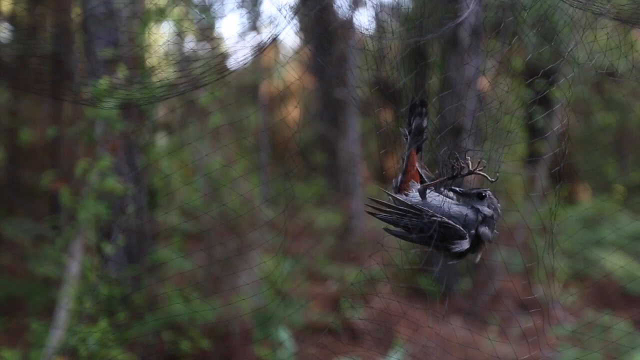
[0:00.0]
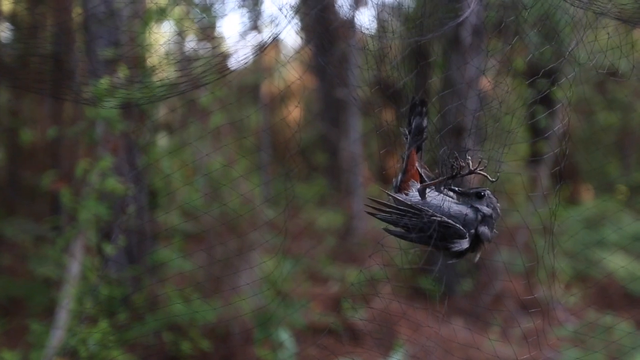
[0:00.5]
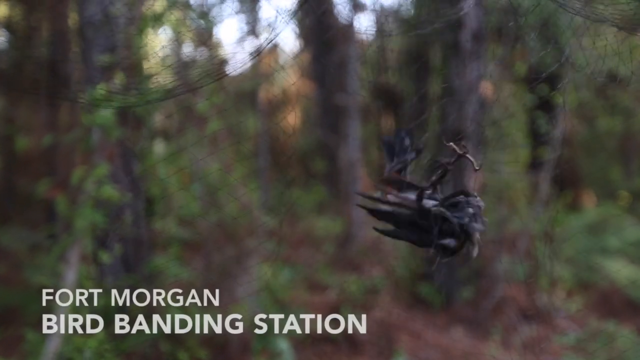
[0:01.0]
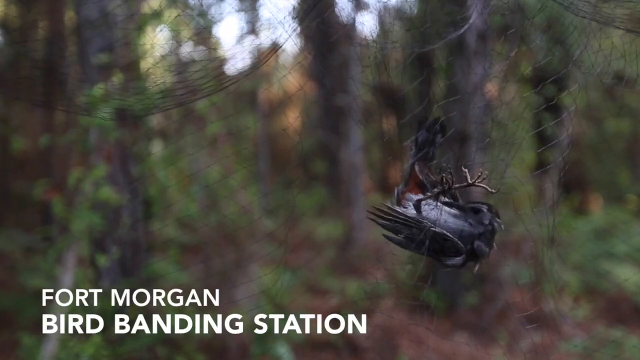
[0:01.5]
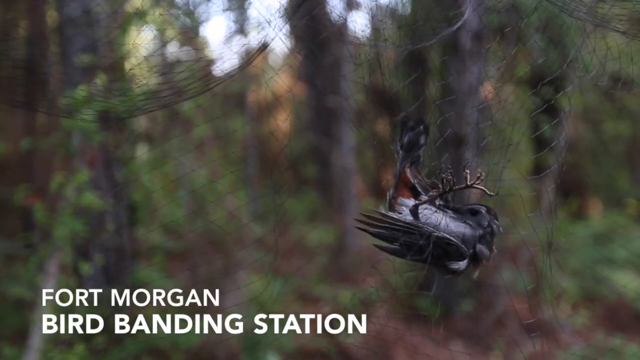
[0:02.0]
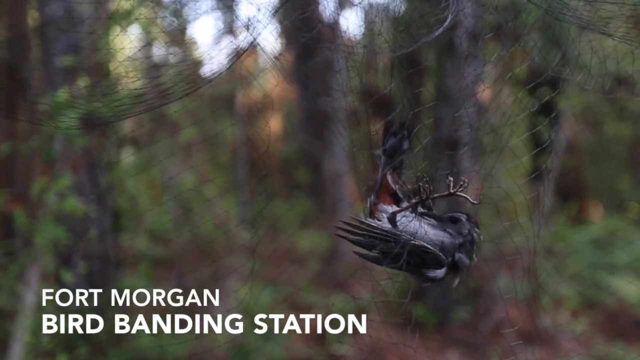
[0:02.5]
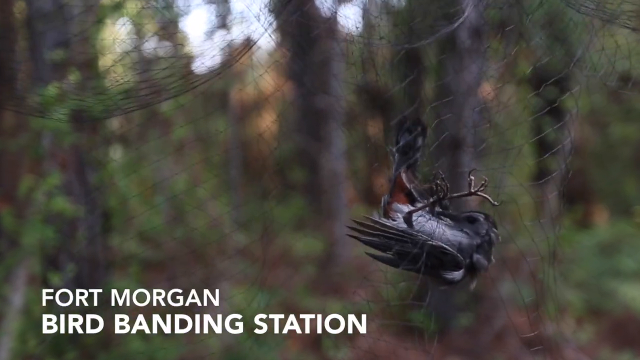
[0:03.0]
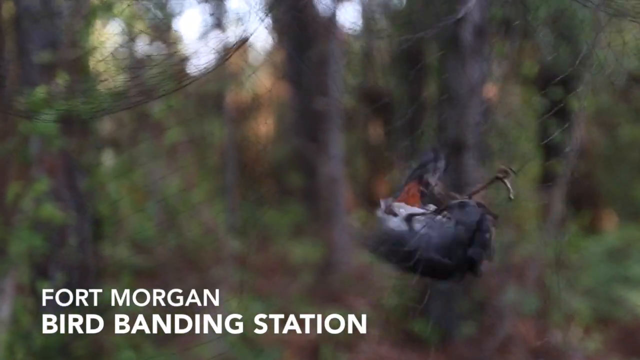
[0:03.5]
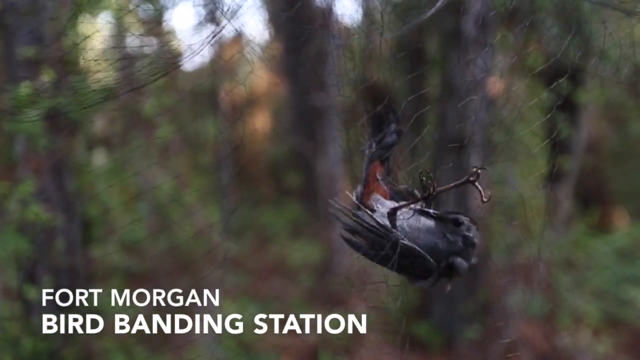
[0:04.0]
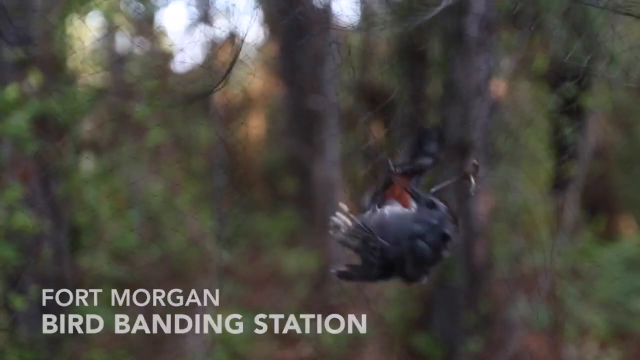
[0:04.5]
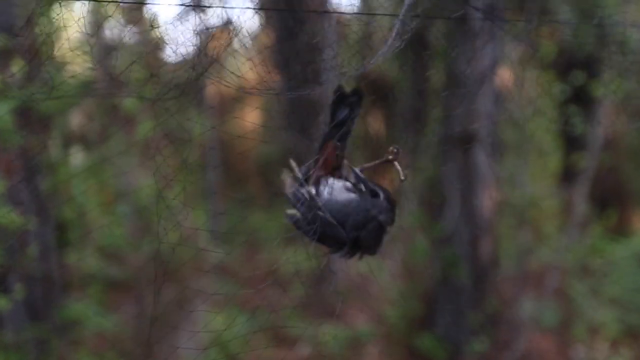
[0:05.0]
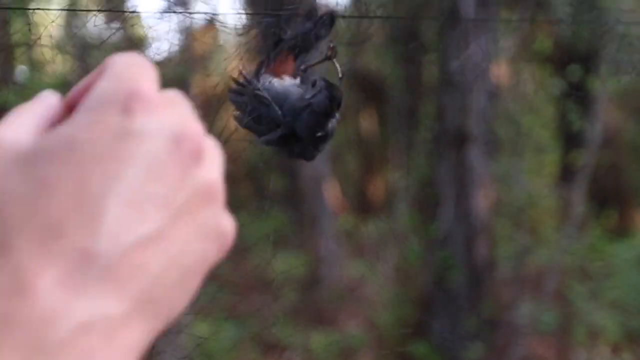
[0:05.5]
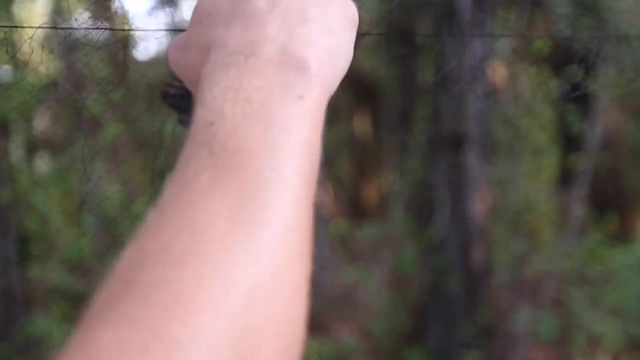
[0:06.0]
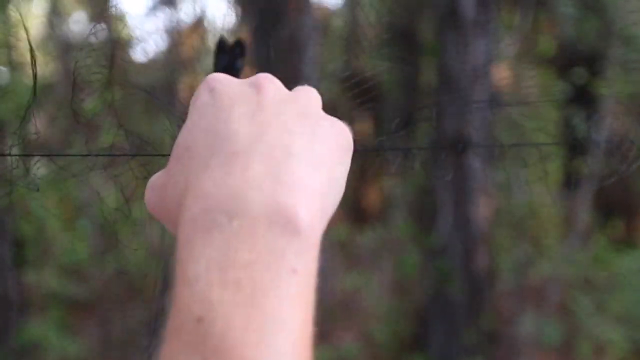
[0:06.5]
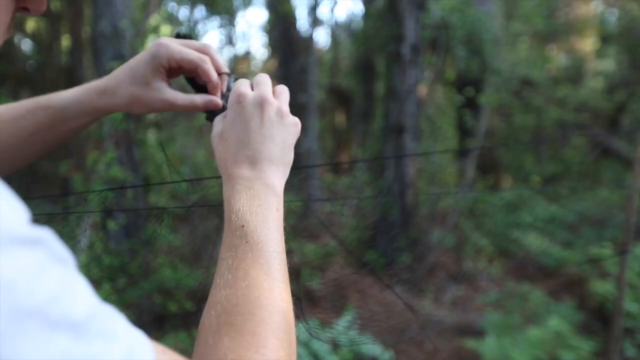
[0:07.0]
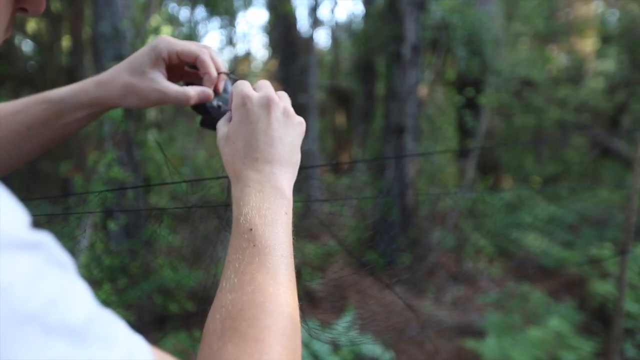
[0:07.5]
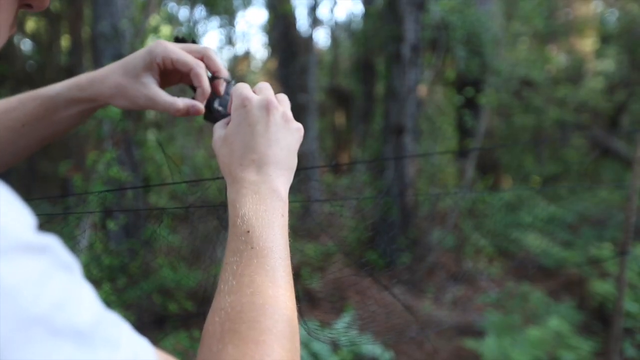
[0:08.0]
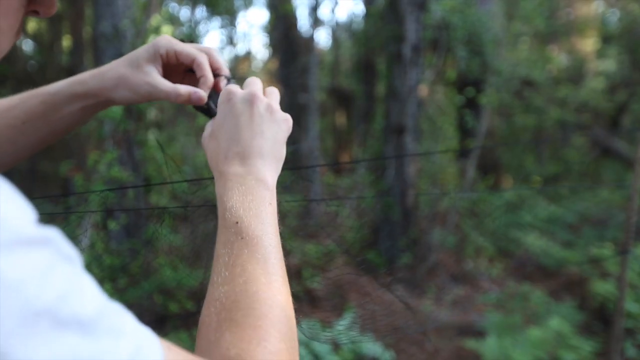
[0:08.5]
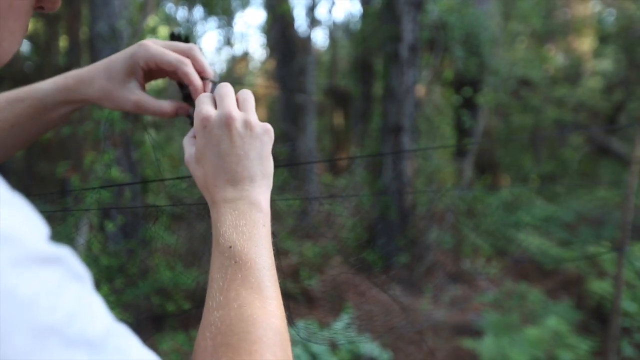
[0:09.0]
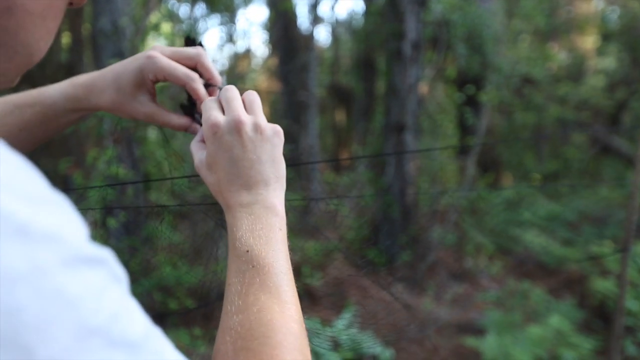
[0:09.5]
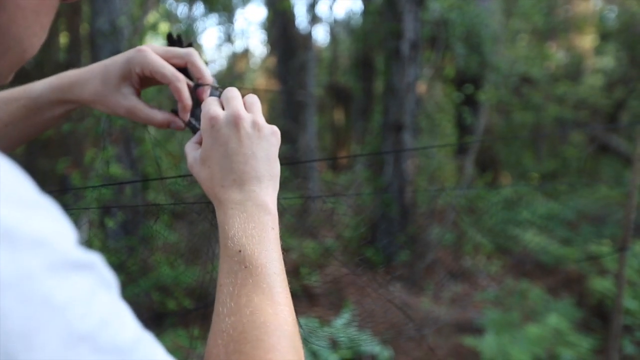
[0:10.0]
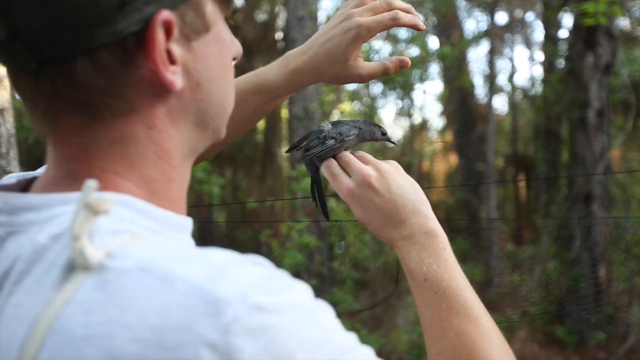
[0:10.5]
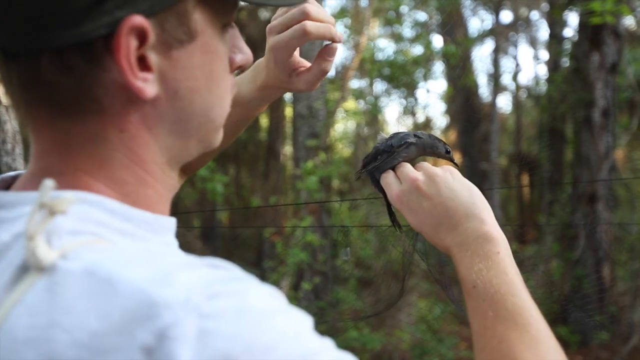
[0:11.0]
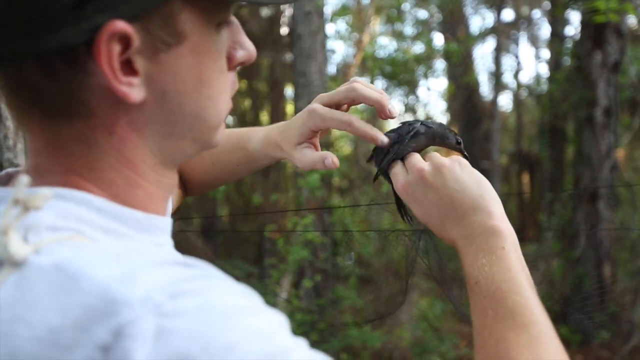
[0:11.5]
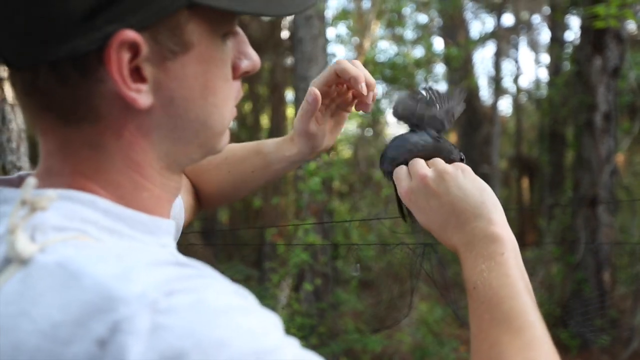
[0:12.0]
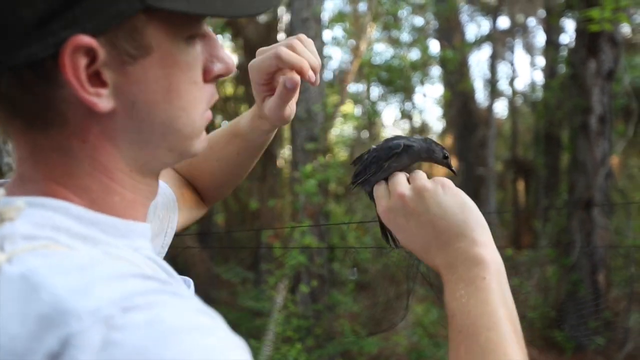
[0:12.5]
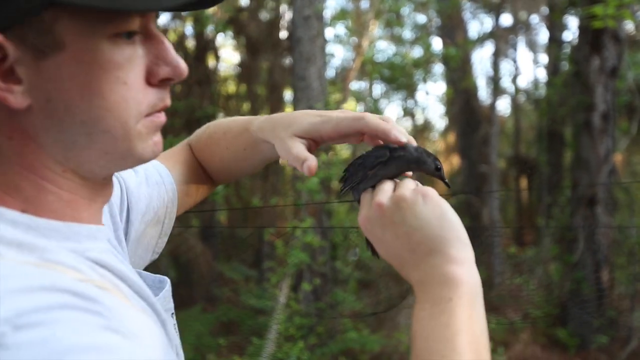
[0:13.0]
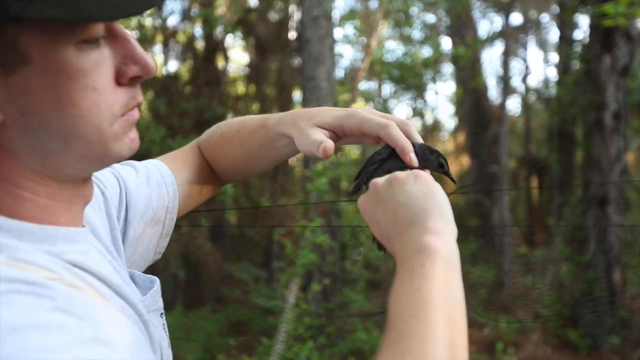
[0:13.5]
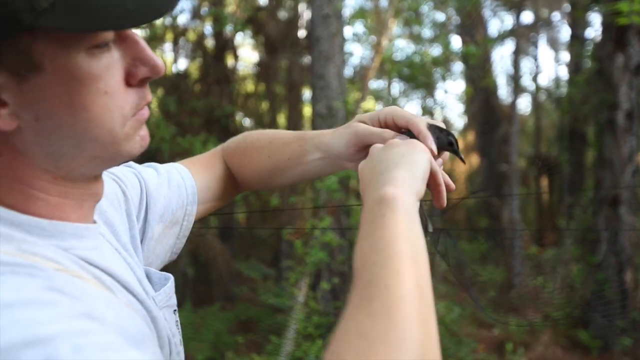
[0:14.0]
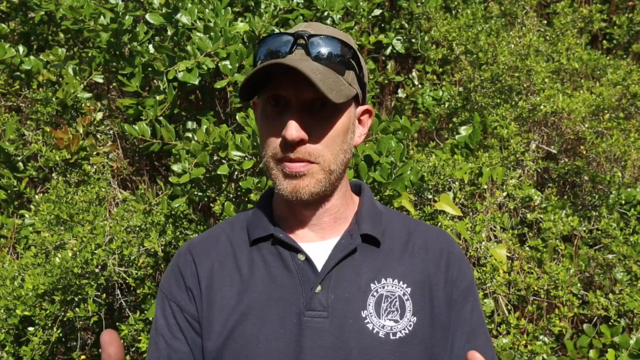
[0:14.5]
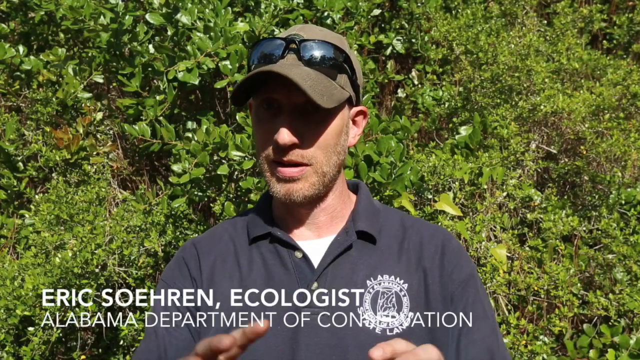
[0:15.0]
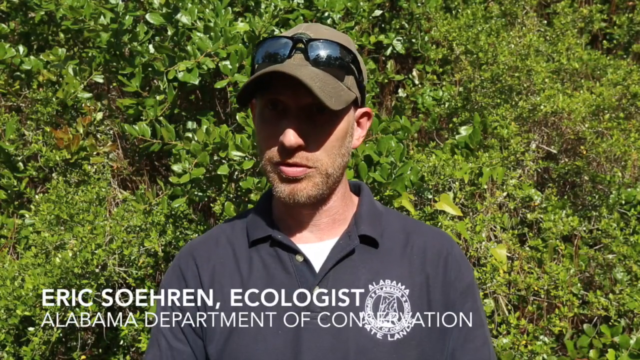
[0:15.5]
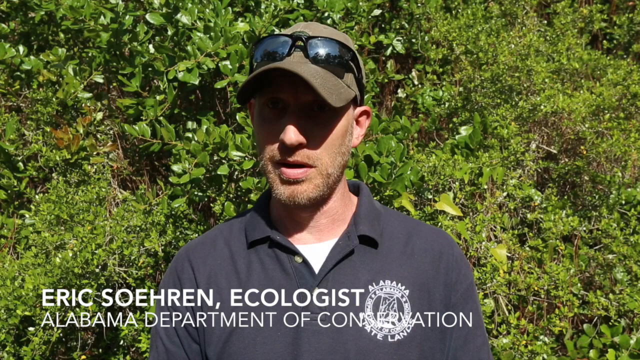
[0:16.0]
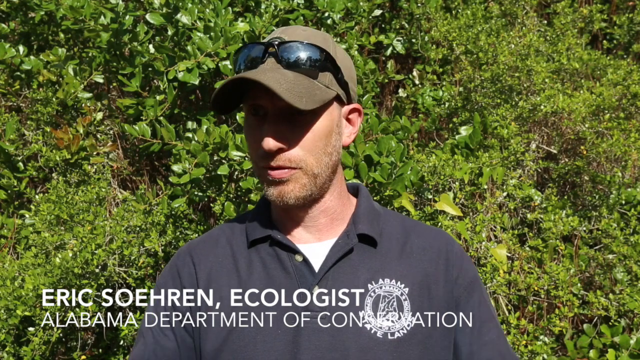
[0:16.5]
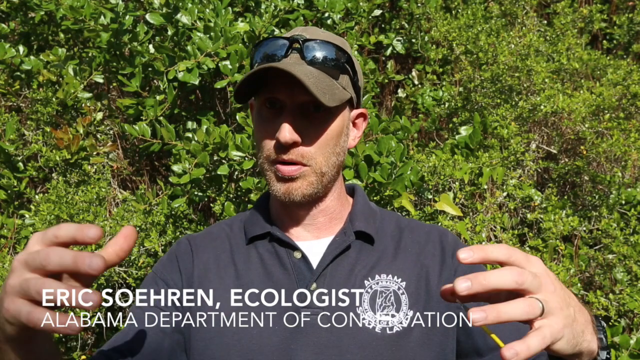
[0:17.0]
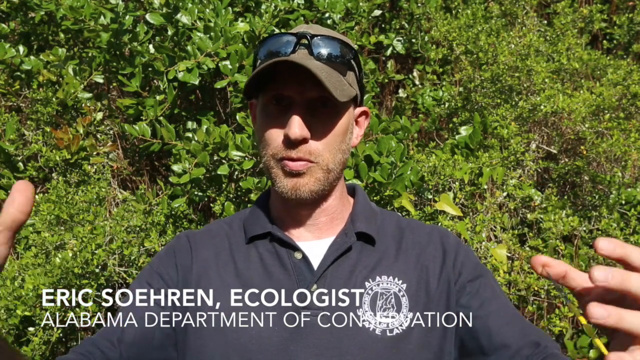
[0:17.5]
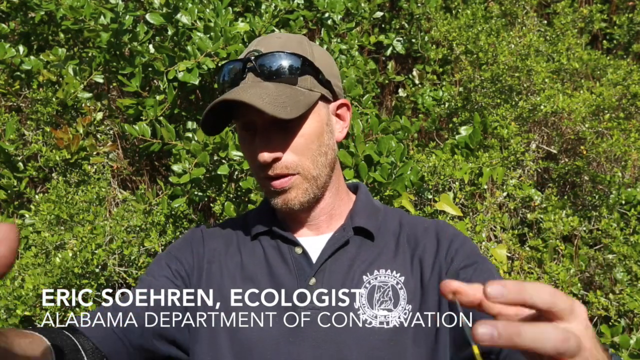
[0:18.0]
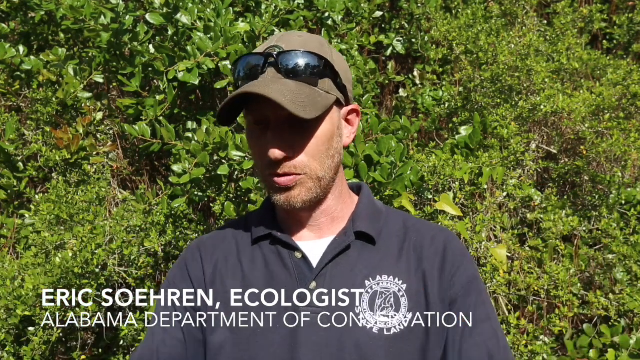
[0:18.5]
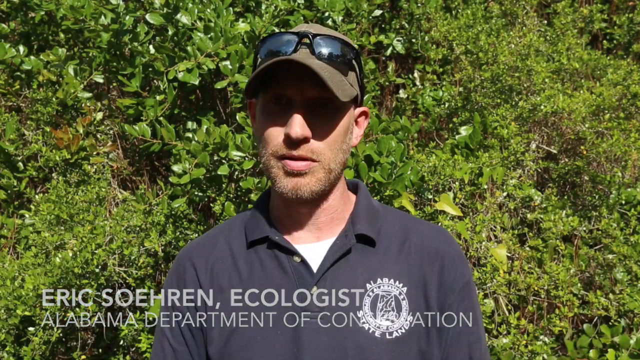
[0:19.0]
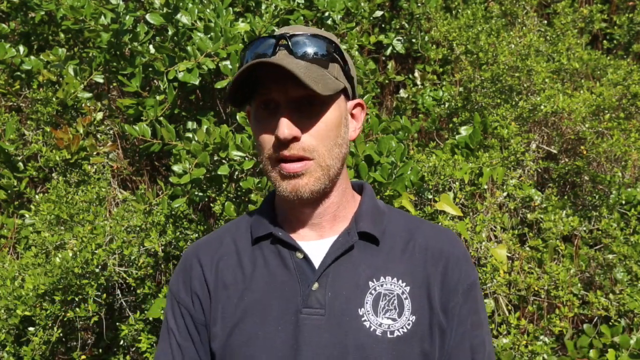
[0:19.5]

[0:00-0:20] A bird is pinned by a net and struggles to get out of it. A hand reaches out to help the bird caught in the net. A man is introduced as Eric Stonehand, an ecologist, Alabama, the Director of Conservation. He stands in front of greenery that looks like a plantation, wearing a cap and with his sunglasses with him as he talks.